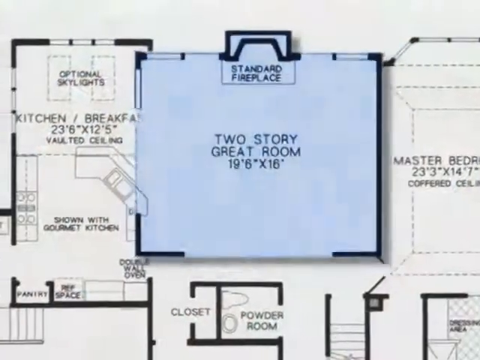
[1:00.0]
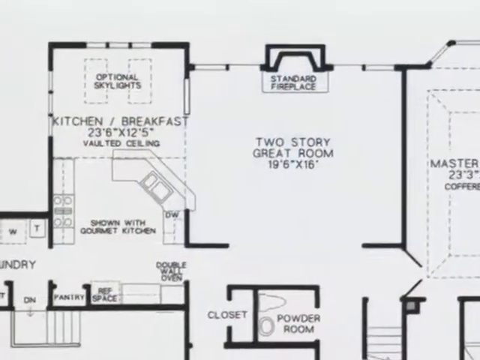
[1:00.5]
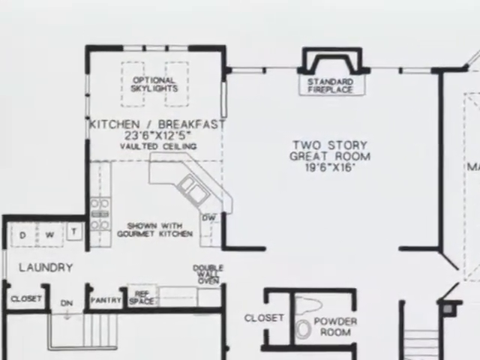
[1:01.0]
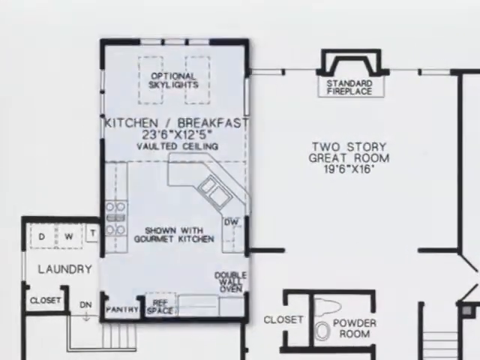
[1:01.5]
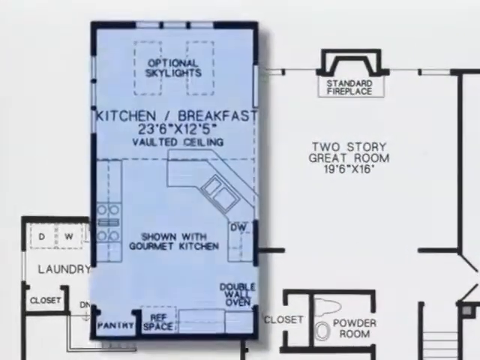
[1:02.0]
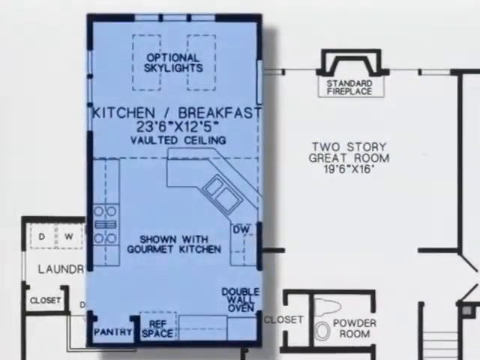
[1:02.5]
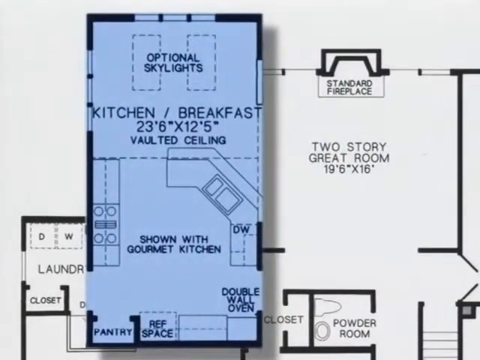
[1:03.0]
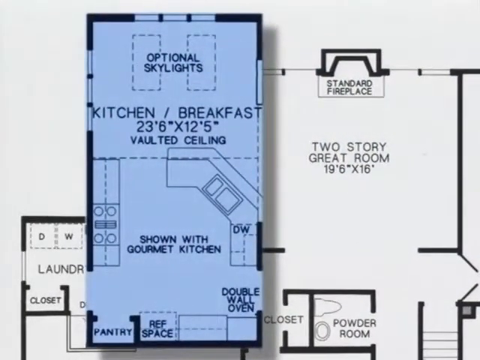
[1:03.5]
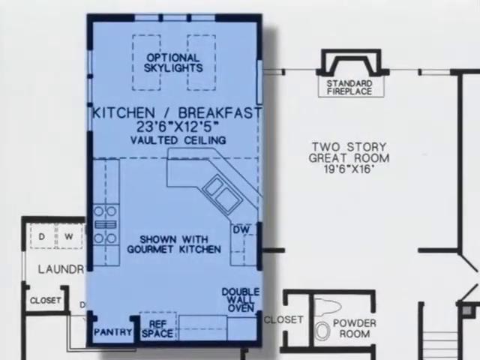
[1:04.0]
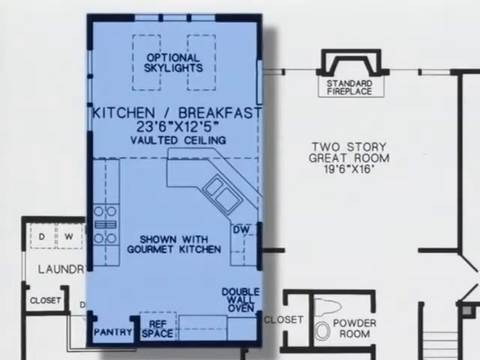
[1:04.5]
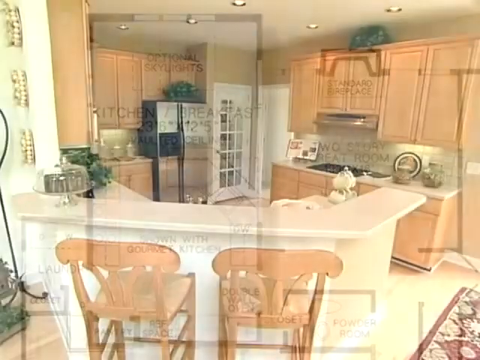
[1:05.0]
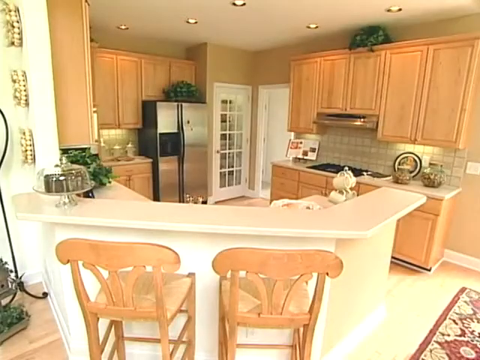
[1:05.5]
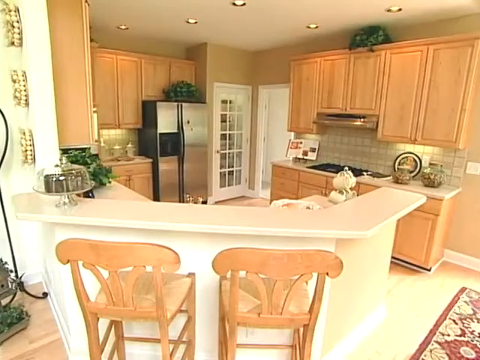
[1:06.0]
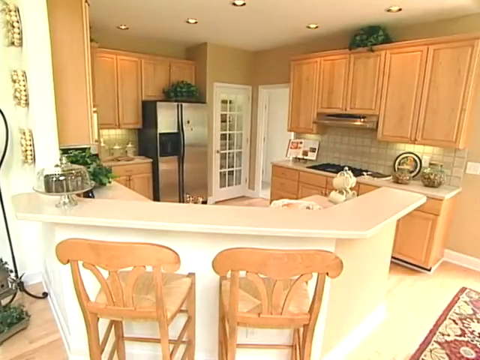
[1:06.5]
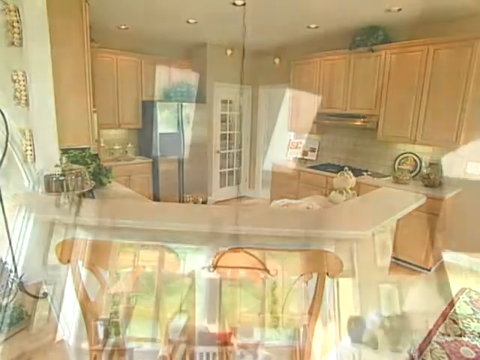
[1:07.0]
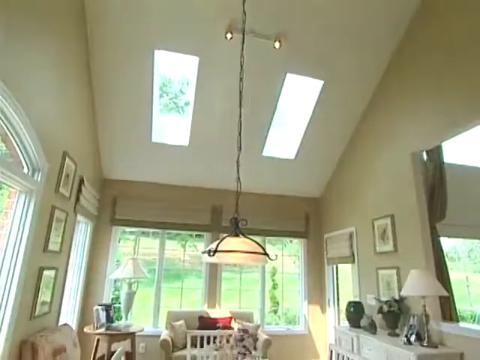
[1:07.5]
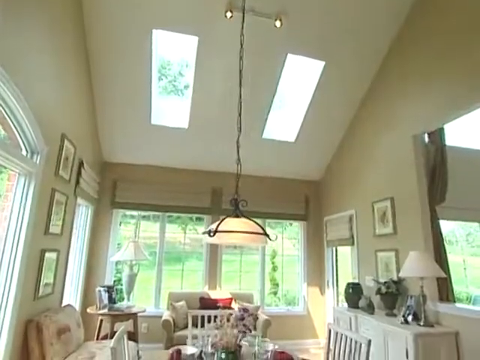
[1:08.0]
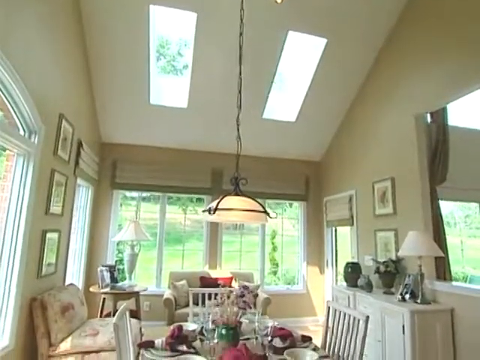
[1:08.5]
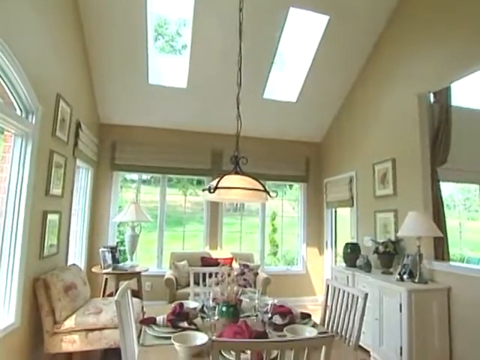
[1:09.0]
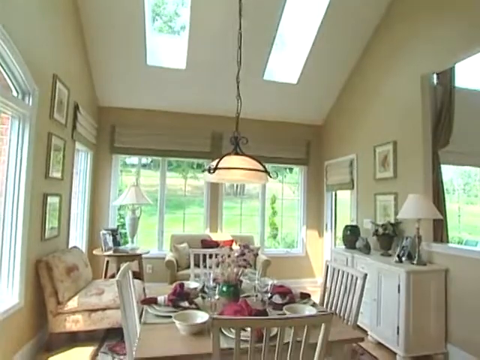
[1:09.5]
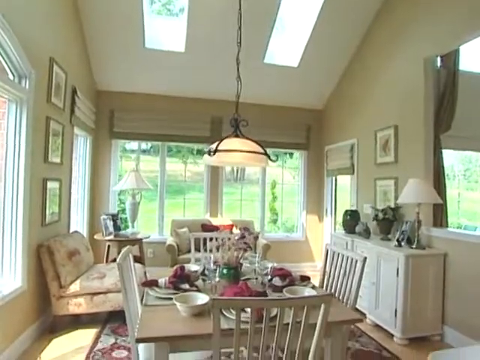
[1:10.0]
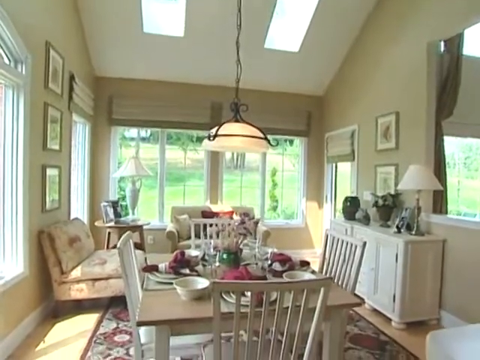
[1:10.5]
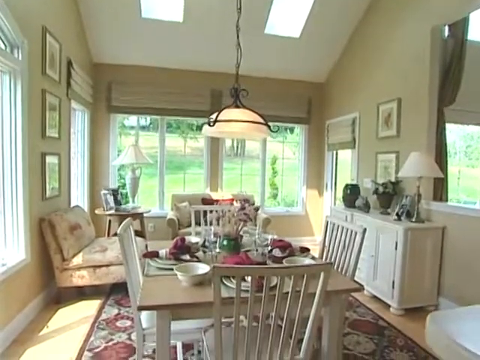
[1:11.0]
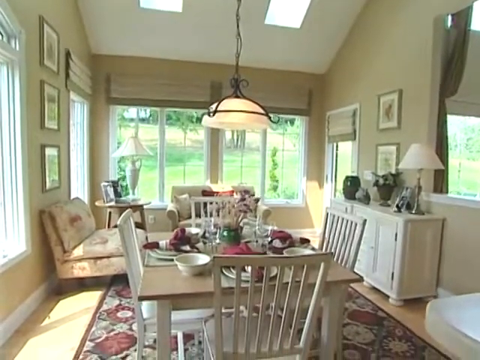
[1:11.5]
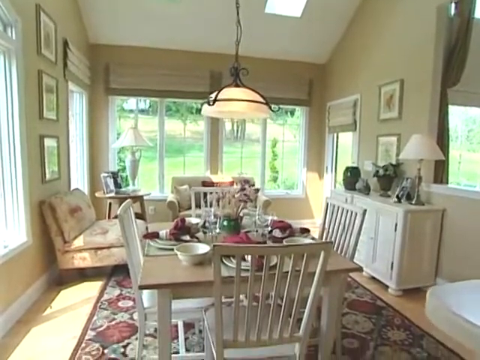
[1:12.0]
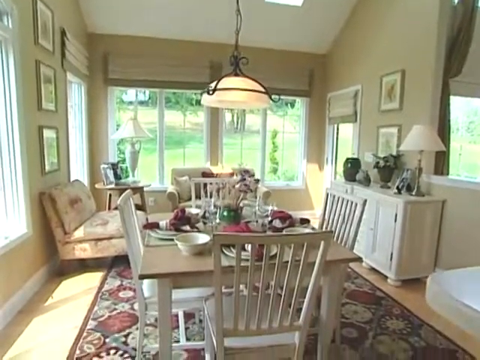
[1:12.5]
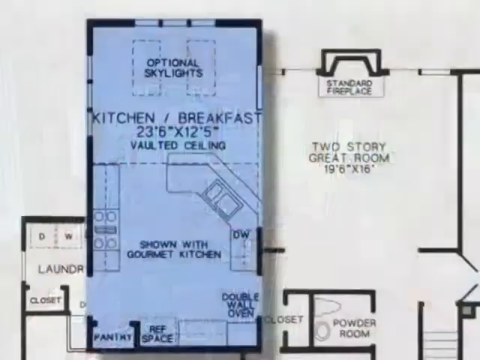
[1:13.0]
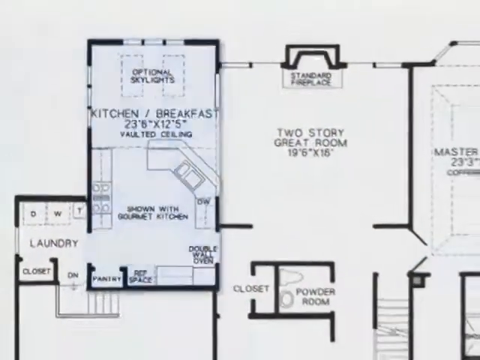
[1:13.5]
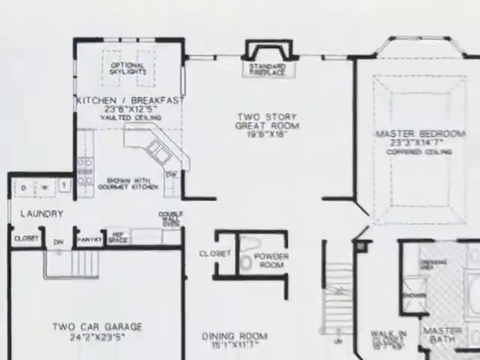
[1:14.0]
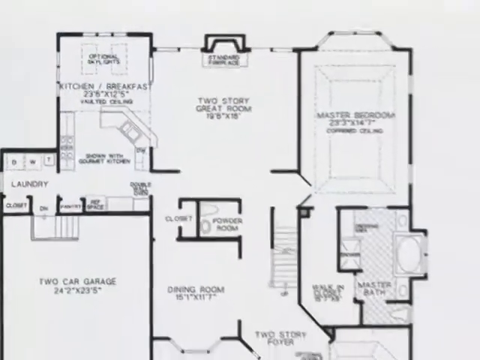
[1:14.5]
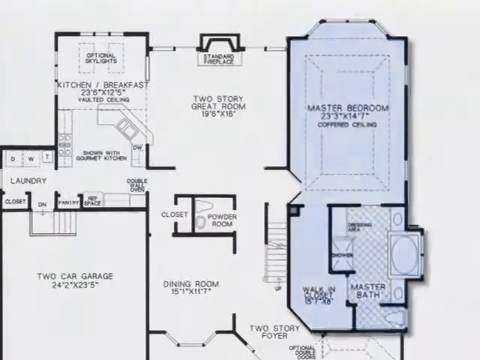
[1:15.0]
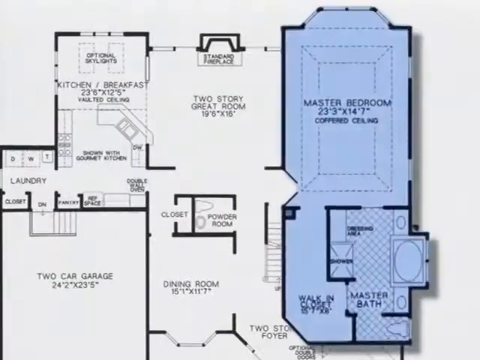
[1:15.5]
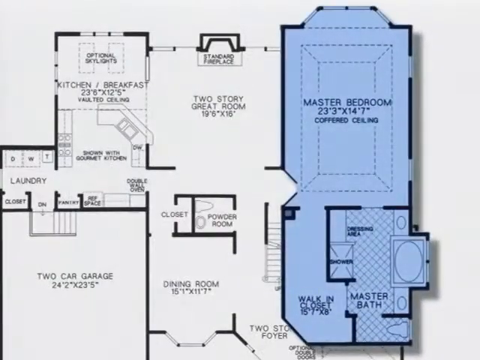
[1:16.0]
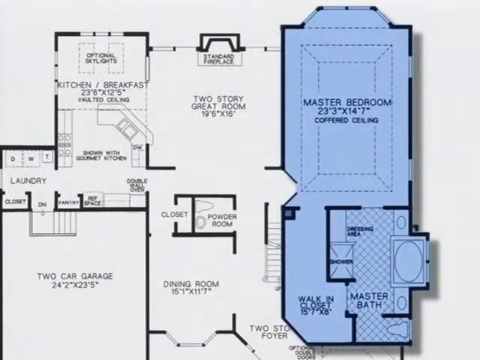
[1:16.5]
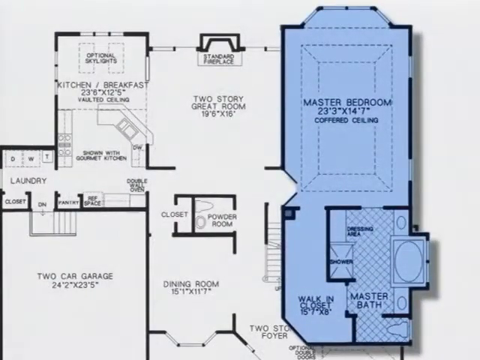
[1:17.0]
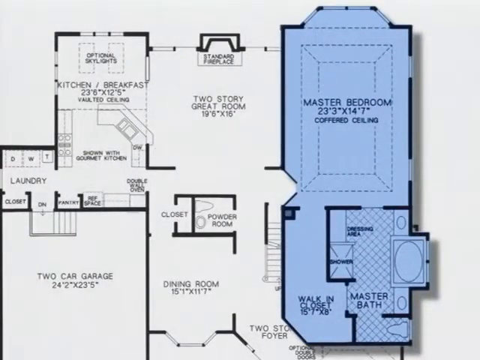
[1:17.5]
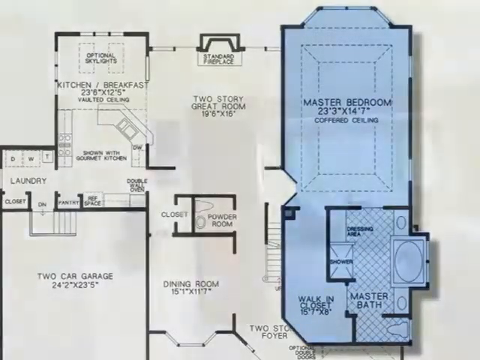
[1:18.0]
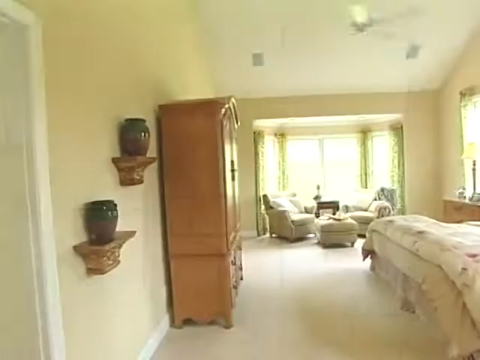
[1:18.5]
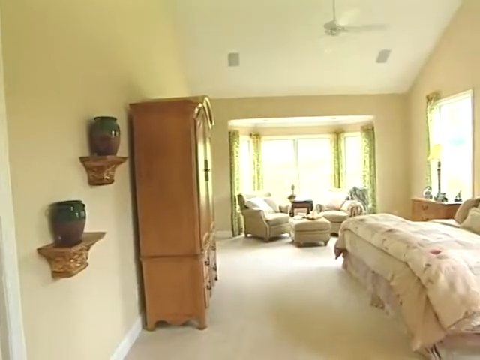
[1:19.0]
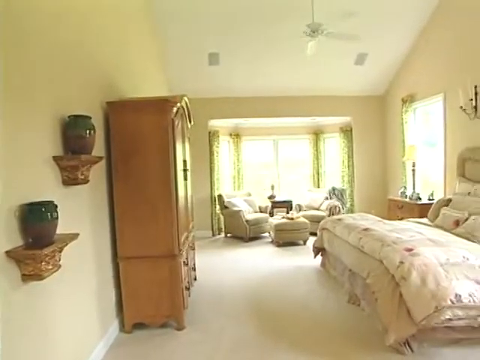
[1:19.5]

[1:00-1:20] The floor plan appears, with the two-story great room returning to normal white. The camera pans to the left, where the kitchen/breakfast area is highlighted, enlarged, and turns blue. The kitchen dining area follows, starting with the kitchen: wooden cabinets, an extractor fan and a hob, and a silver steel fridge with some plants on top. There is a plant on top of the cabinets to the right, more cabinets to the left, and more cabinets below each of the higher cabinets. There are two doorways in an L shape from each other; one door is open and the other is closed, with a glass grid effect. A cookbook stands open on a stand, and a cake in a glass cake container is on what appears to be a breakfast table in the foreground of the frame. There are two wooden breakfast table chairs, and a small part of a rug is visible to the right. The frame switches to another room with dining tables, a long light fitting, and two large skylights above them; below the skylights is a large window with what looks like a long blind. There are framed pictures on the wall, and a lamp and an ornament on a small white table. A couple of sofas are behind the dining table, and the chairs are on a red and green patterned rug. The floor plan comes back into view, this part returns to normal white and regular size, and the master bedroom section enlarges and turns blue. The master bedroom then comes into frame: a bed with white bedding with a slight matte pink, and two sofas with a footrest between them in the foreground. Two pots stand on some strange ceramic shelves next to a wooden wardrobe, and there is a ceiling fan on the sloped ceiling. The camera pans slightly to the left.